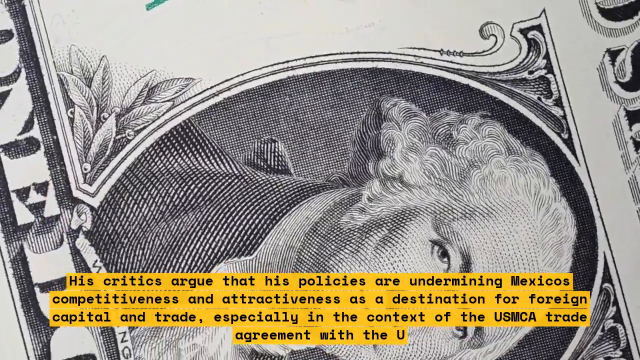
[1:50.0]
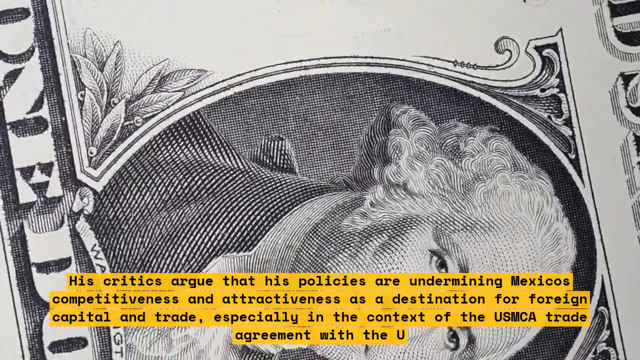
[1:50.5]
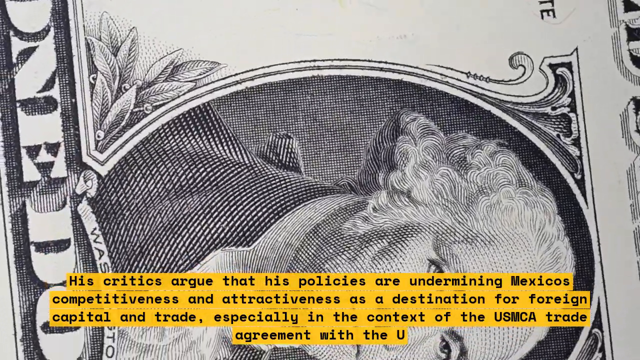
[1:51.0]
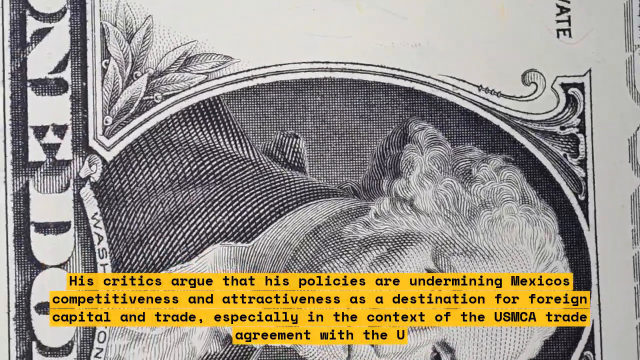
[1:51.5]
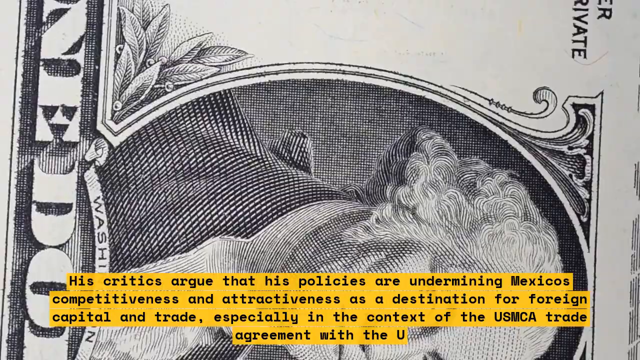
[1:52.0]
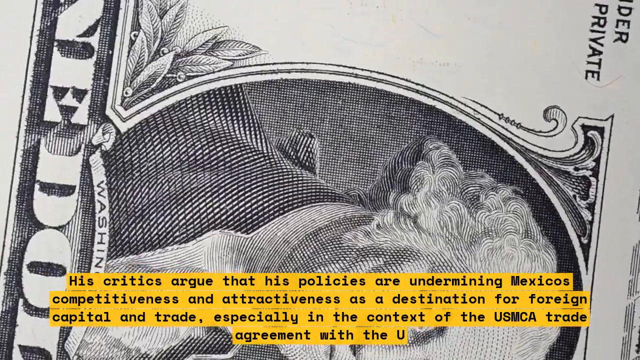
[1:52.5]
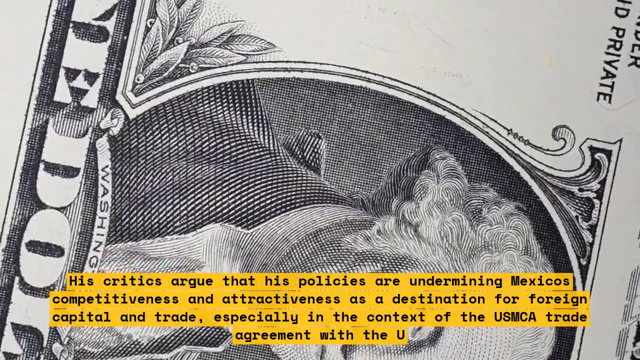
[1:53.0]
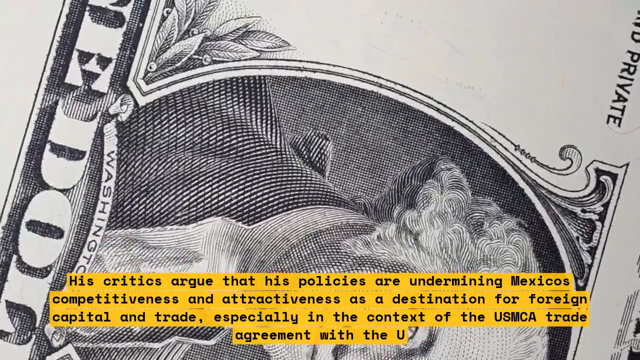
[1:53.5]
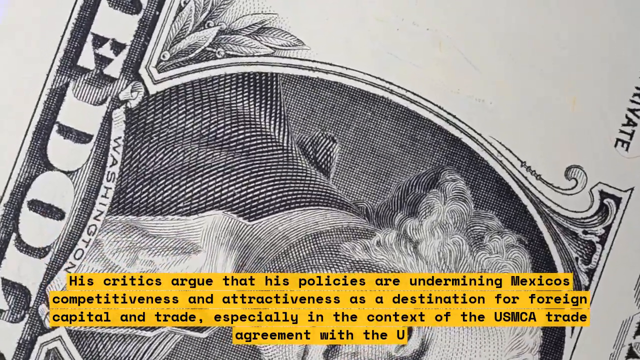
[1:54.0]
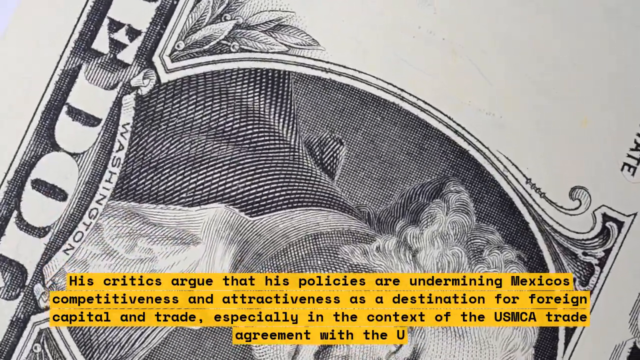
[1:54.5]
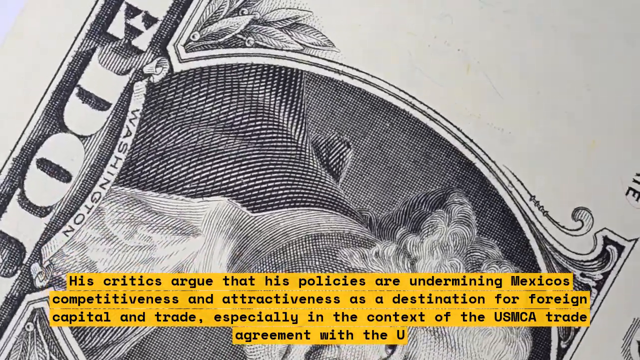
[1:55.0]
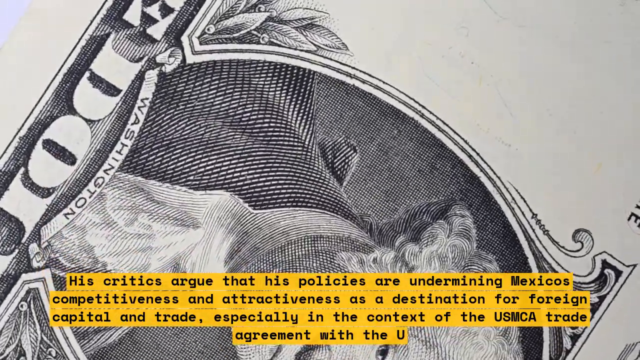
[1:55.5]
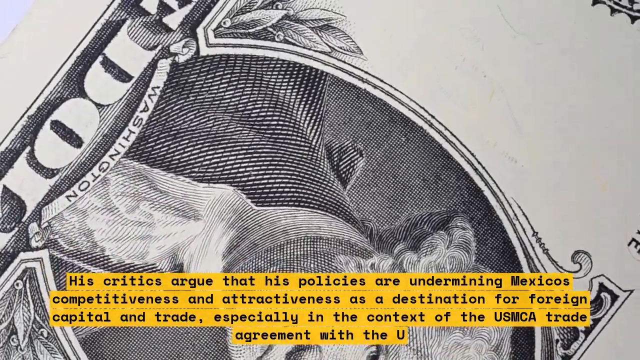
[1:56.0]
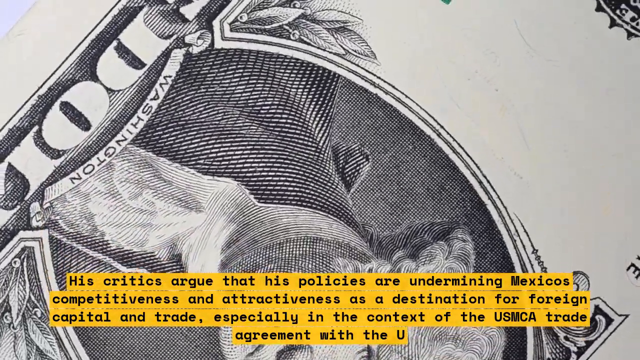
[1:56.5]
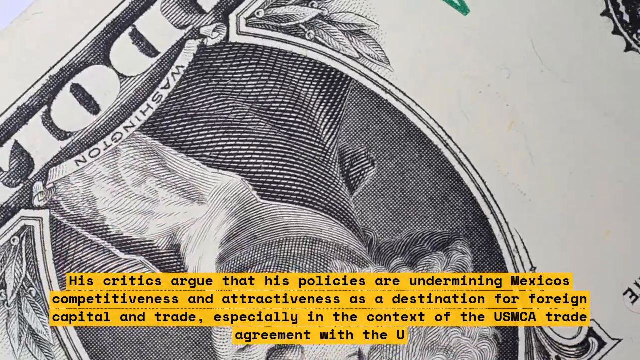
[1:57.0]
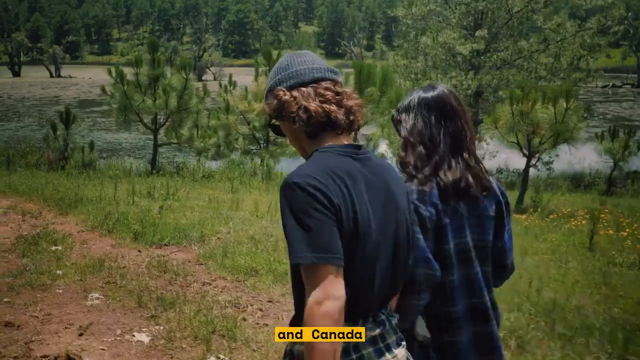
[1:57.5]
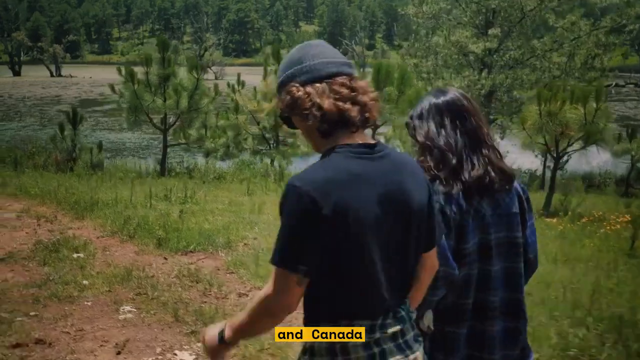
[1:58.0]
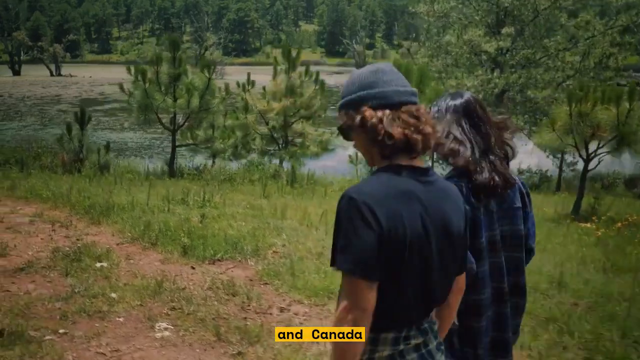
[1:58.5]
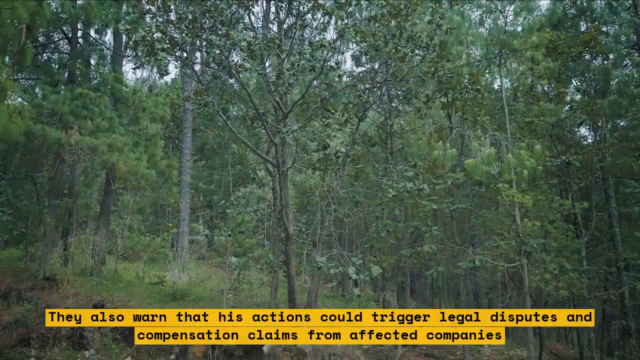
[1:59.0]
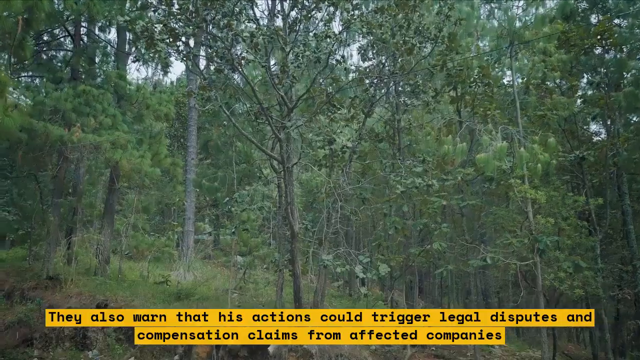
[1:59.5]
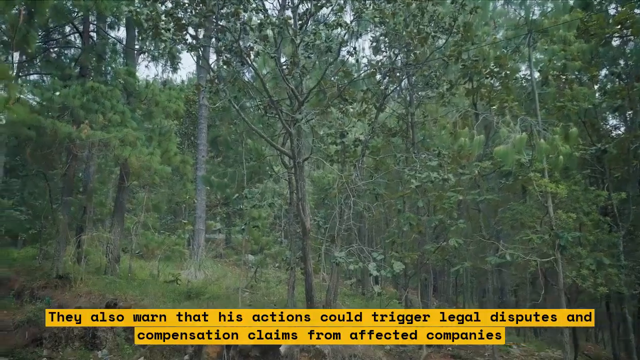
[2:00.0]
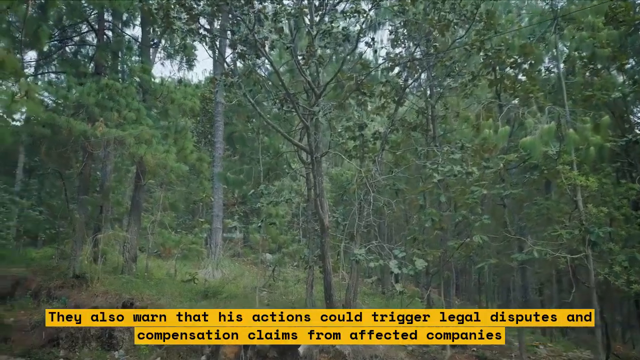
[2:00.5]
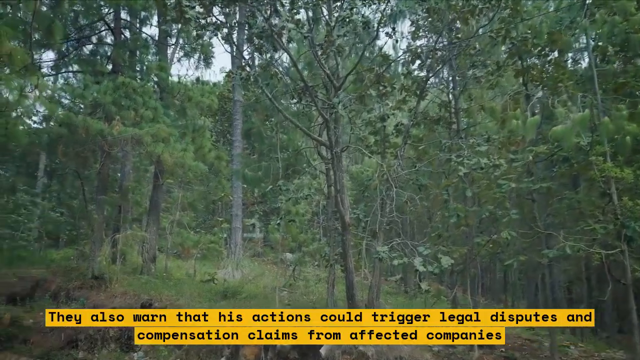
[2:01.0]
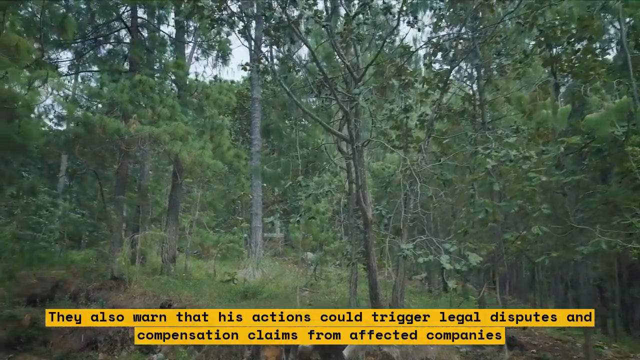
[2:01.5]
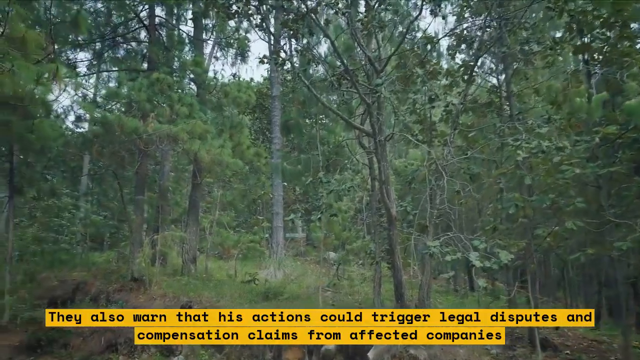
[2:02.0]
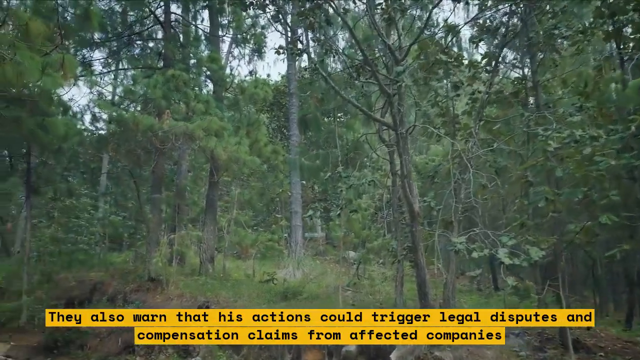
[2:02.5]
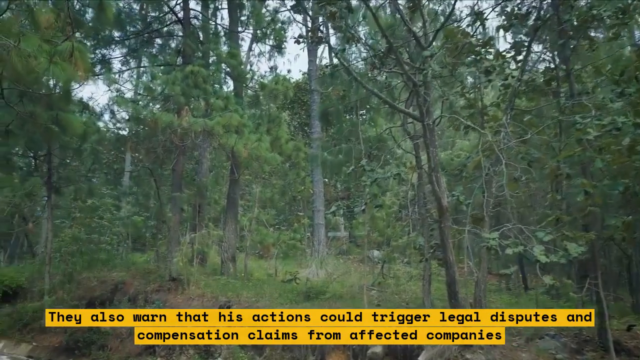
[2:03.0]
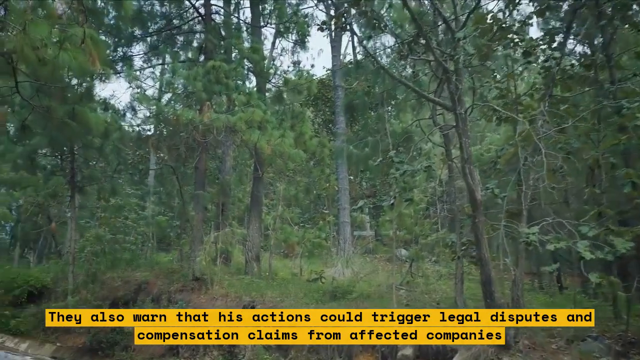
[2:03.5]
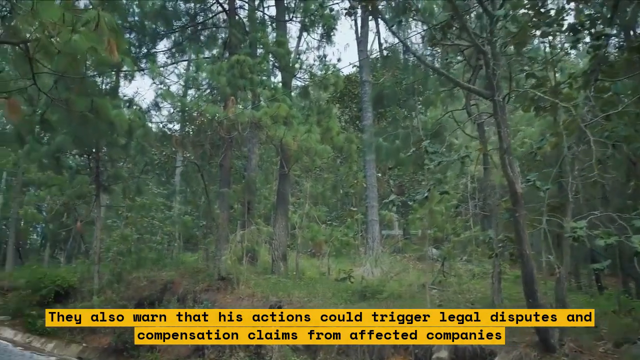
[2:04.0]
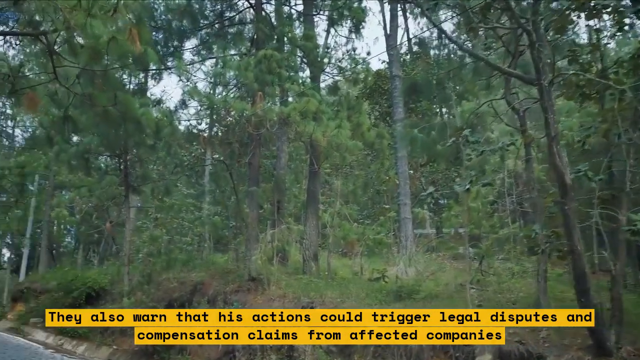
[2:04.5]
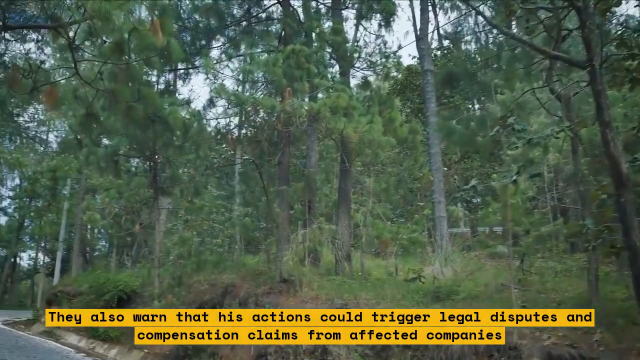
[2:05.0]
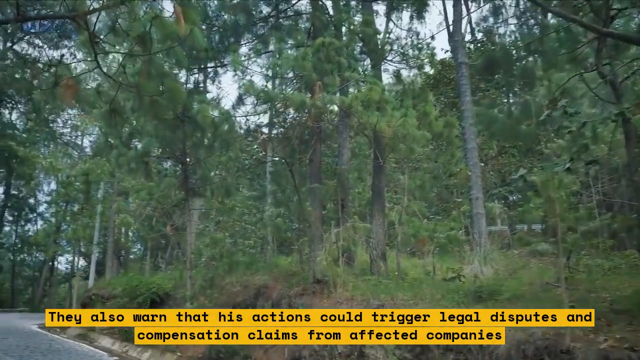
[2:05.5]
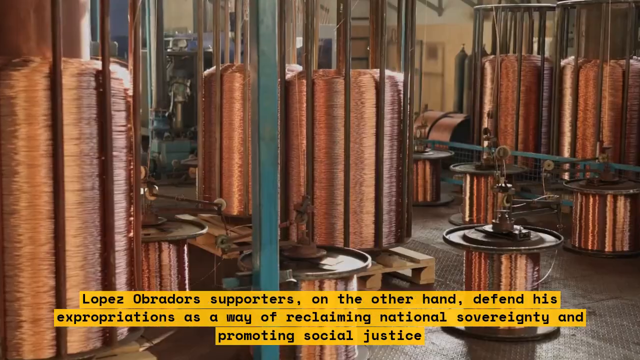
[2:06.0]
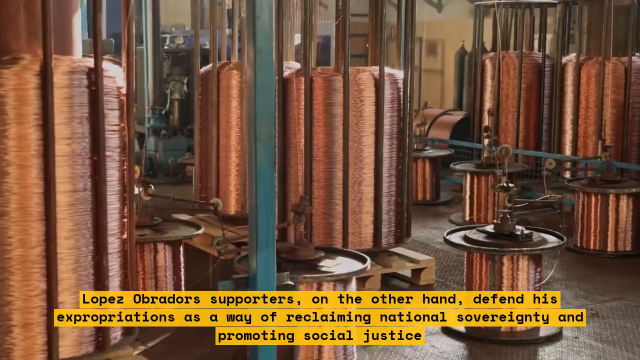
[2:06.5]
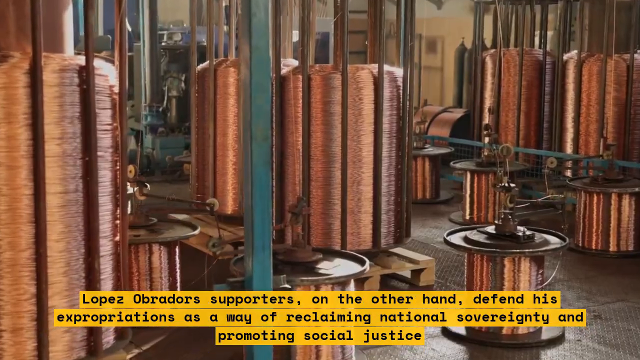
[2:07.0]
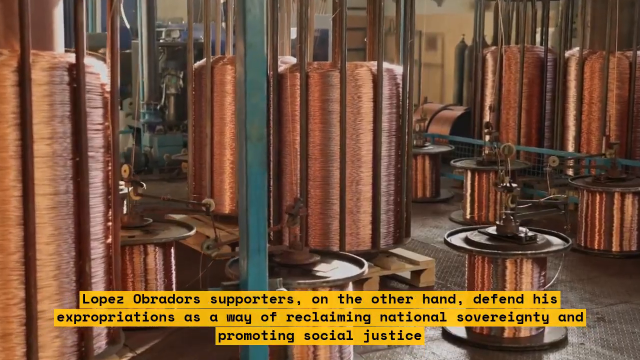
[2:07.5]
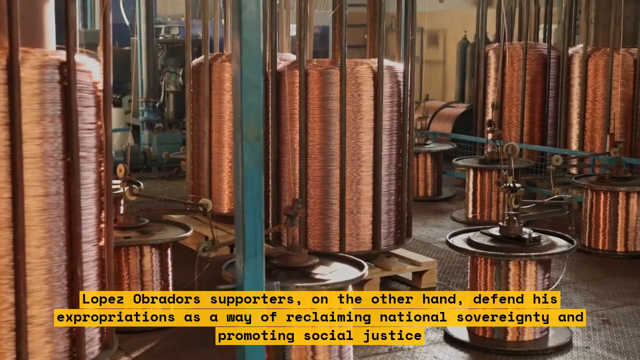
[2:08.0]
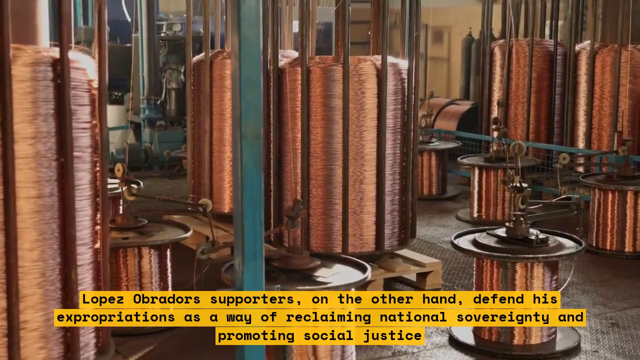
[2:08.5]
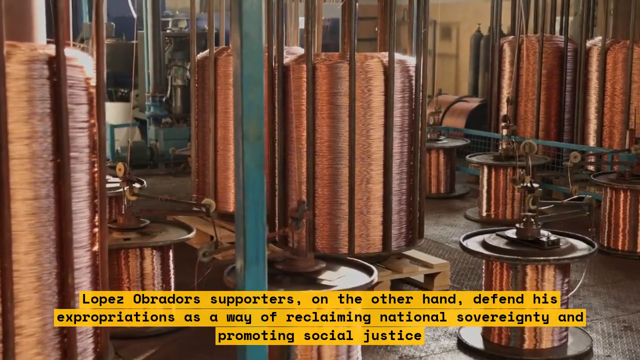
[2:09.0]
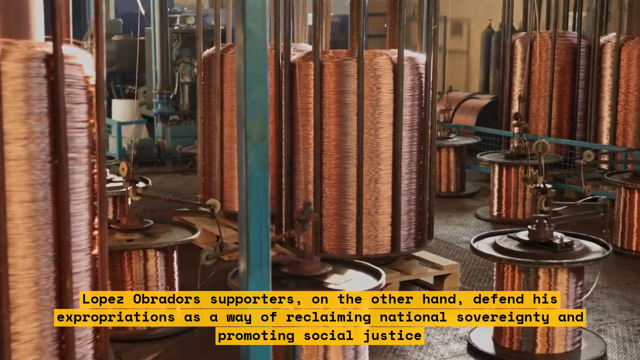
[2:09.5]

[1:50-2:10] American money is shown with text below it reading: "his critics argue that his policies are undermining Mexico's competitiveness and attractiveness as a destination for foreign capital and trade, especially in the context of the USMCA trade agreement with the EU." The text says EU, not USA. The money spins around in the background, and a bill with "Washington" on it is shown. Then some people are walking, followed by greenery with the text: "They also warn that his actions could trigger legal disputes and compensation claims from affected companies." The forest area is shown, then the camera pans around to a street and returns to the copper coils seen earlier, with text reading: "Lopez Obrado's supporters, on the other hand, defend his expropriations as a way of reclaiming national sovereignty and promoting social justice." The view stays on the coils.